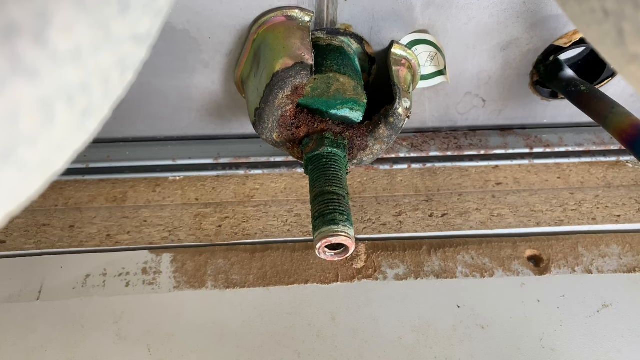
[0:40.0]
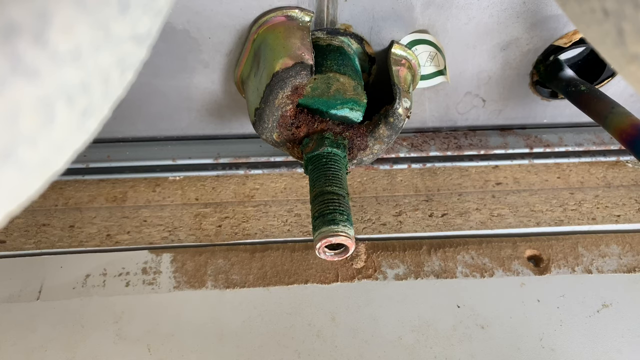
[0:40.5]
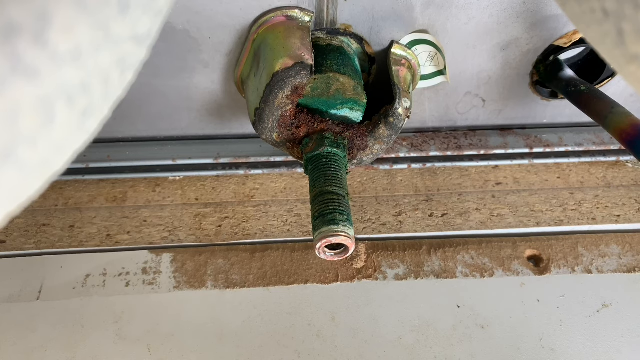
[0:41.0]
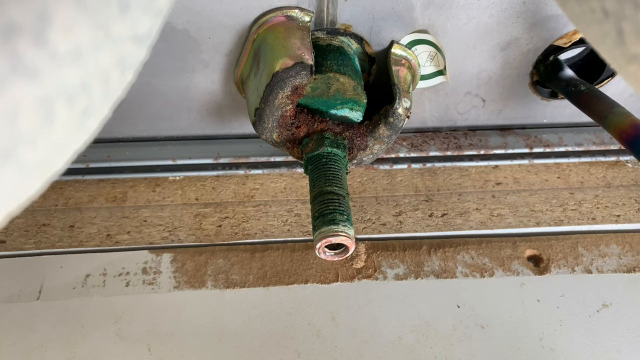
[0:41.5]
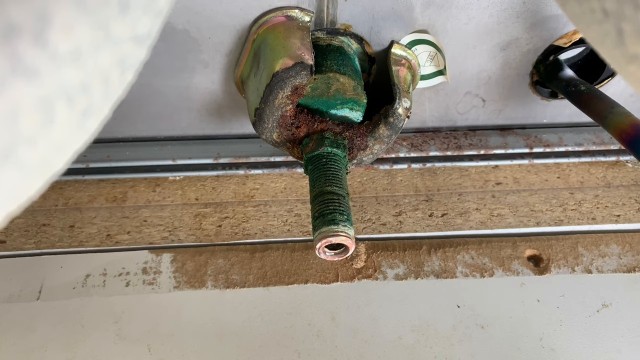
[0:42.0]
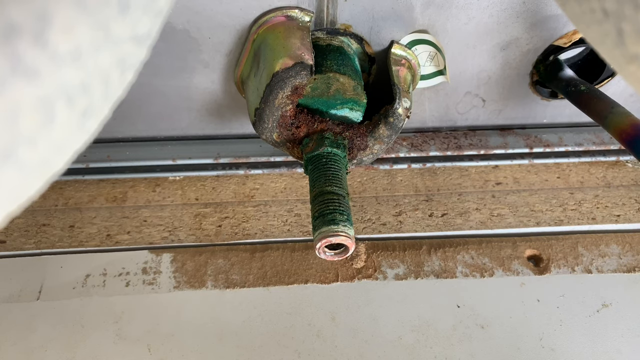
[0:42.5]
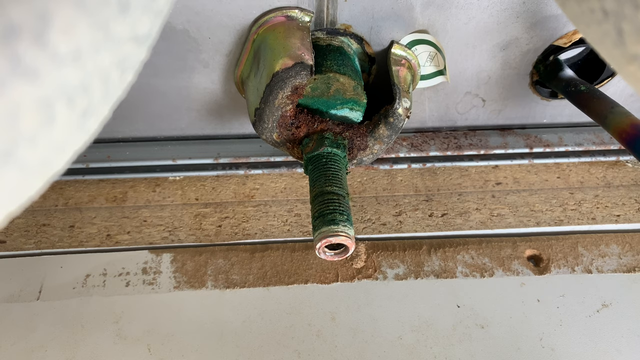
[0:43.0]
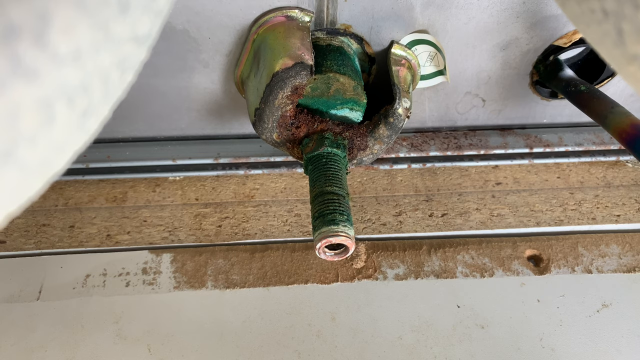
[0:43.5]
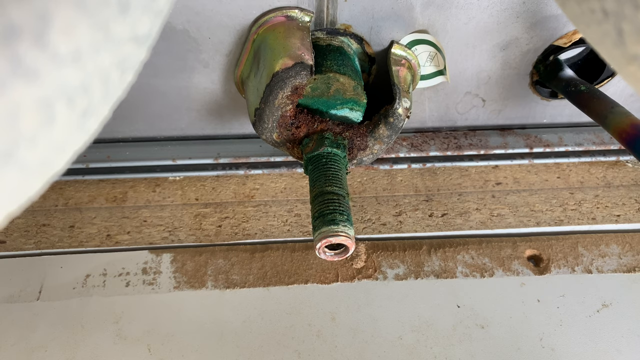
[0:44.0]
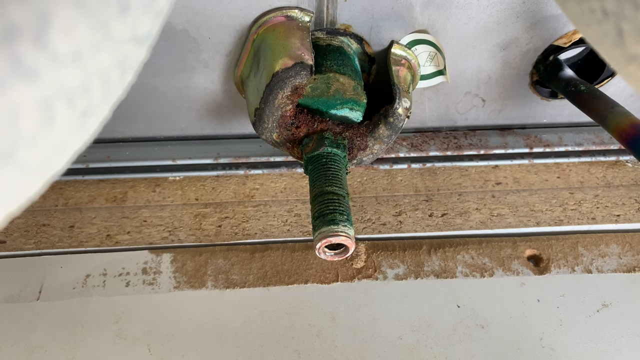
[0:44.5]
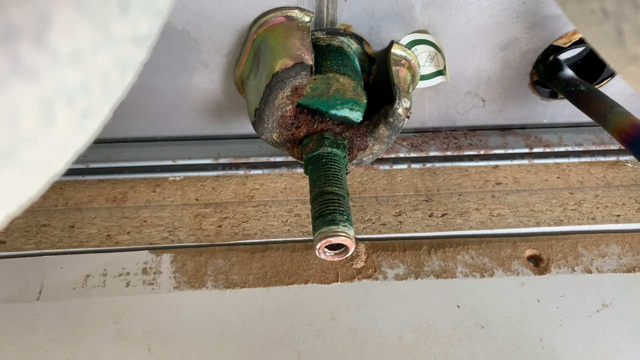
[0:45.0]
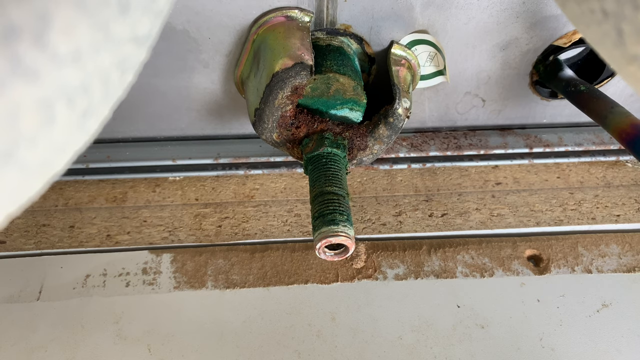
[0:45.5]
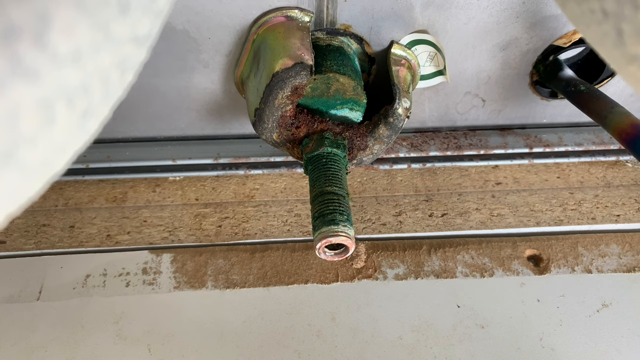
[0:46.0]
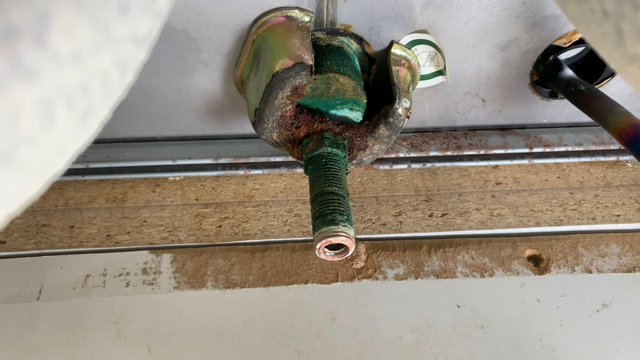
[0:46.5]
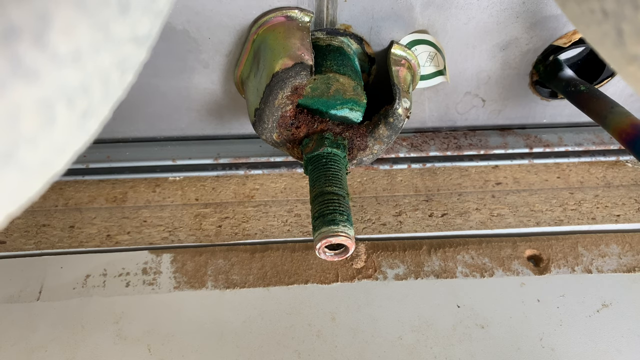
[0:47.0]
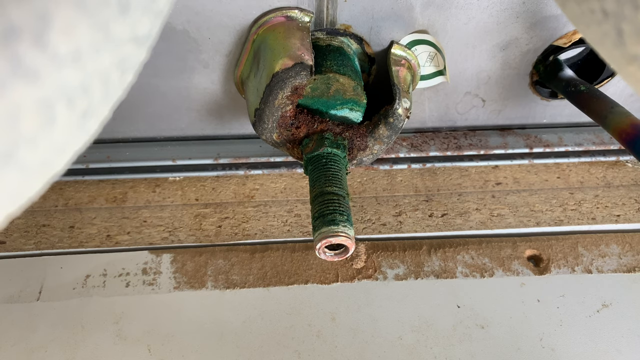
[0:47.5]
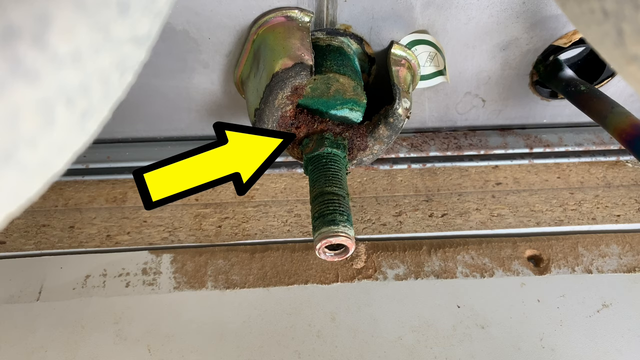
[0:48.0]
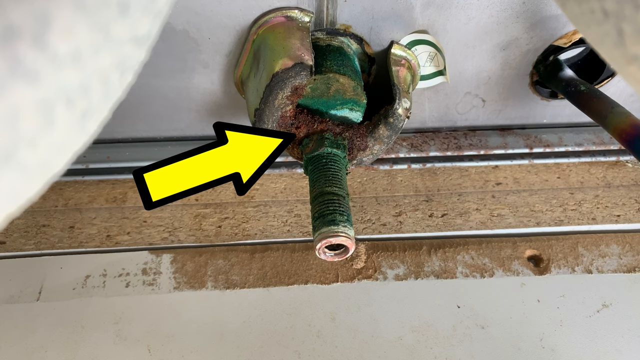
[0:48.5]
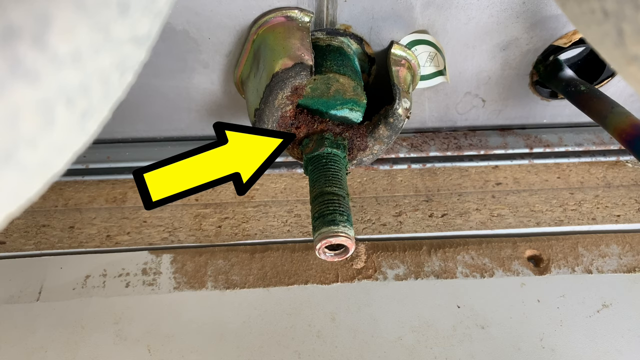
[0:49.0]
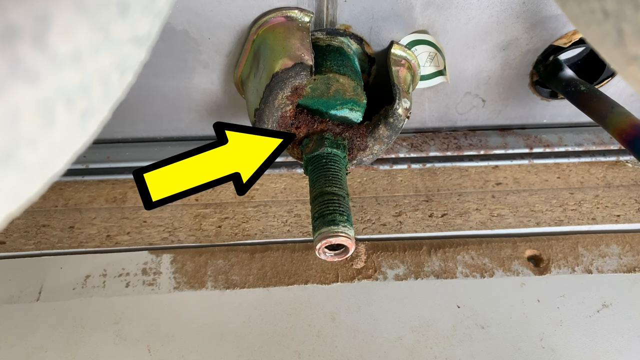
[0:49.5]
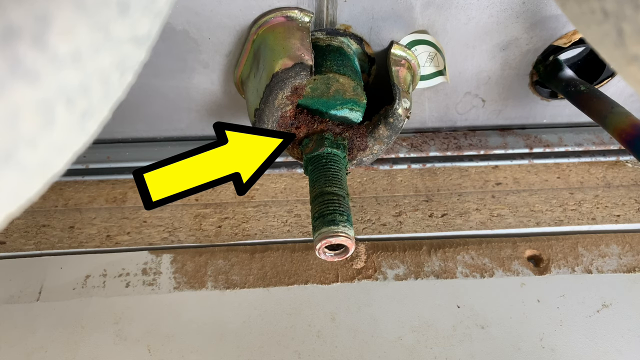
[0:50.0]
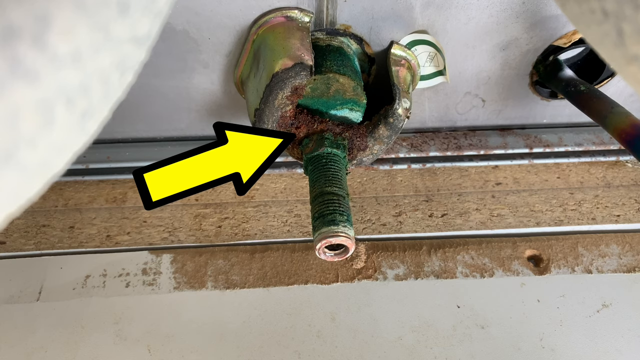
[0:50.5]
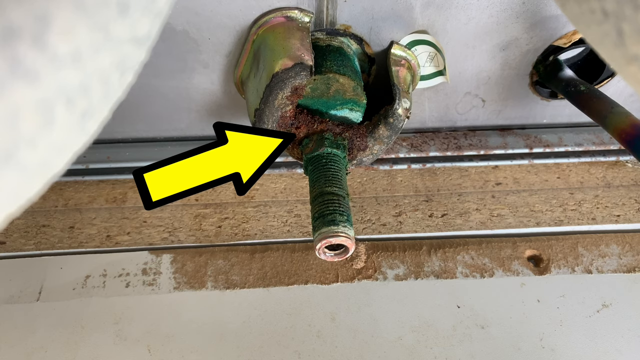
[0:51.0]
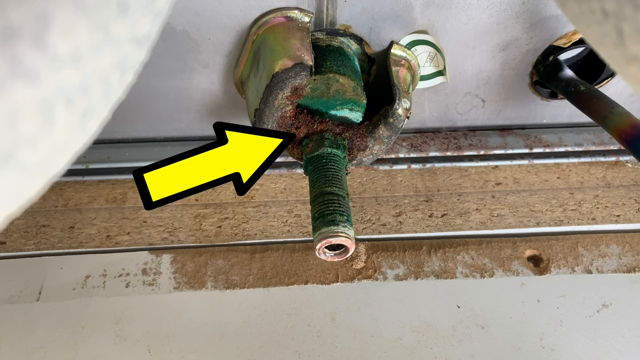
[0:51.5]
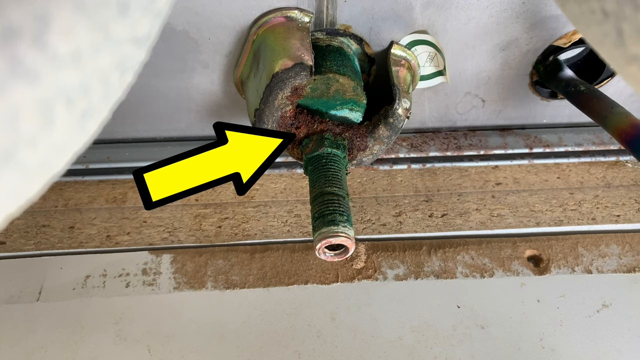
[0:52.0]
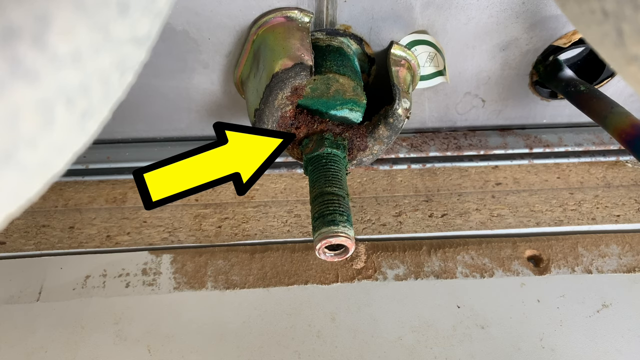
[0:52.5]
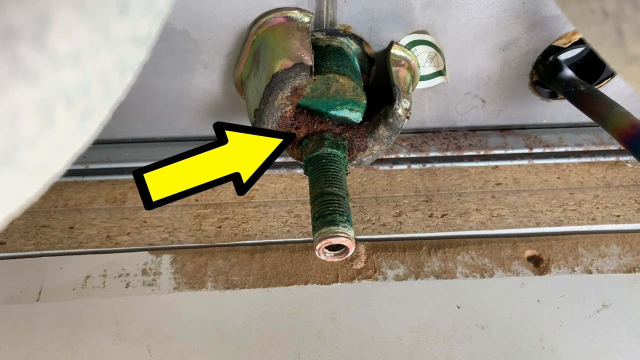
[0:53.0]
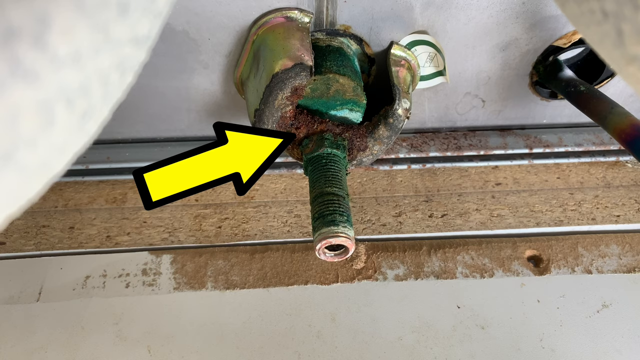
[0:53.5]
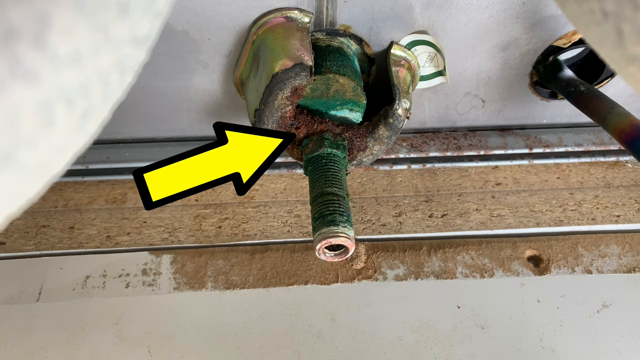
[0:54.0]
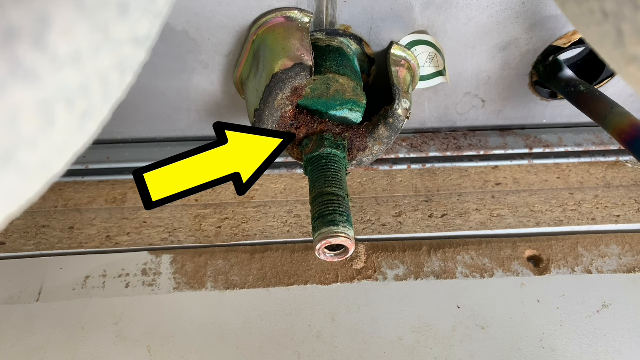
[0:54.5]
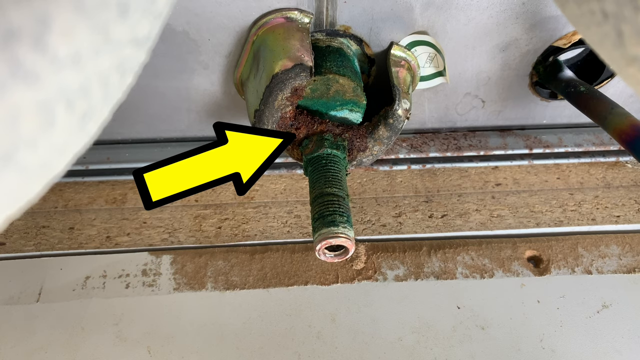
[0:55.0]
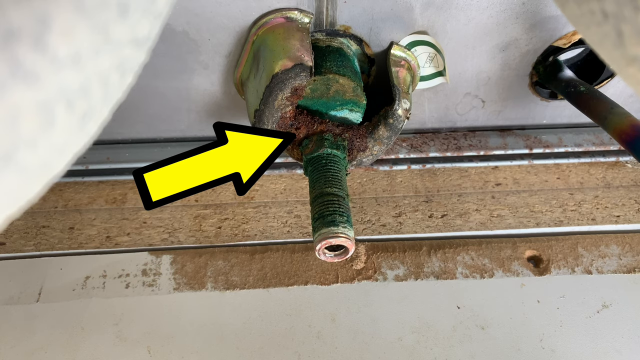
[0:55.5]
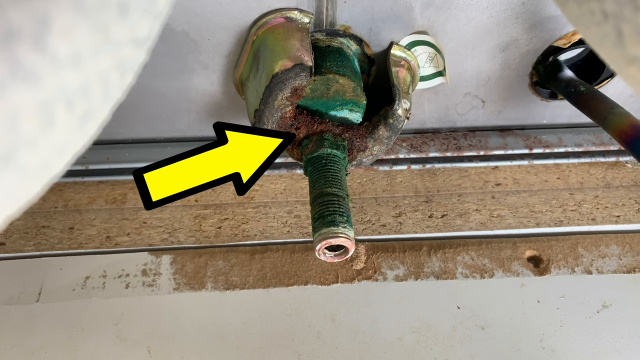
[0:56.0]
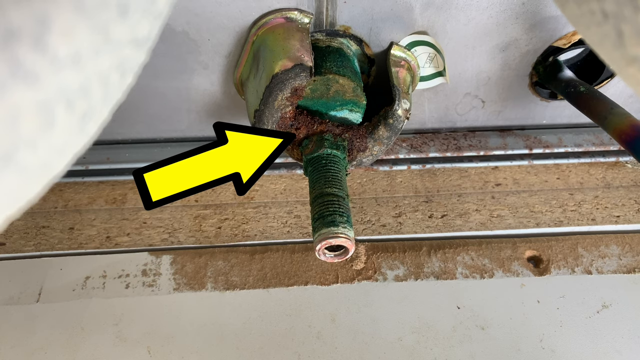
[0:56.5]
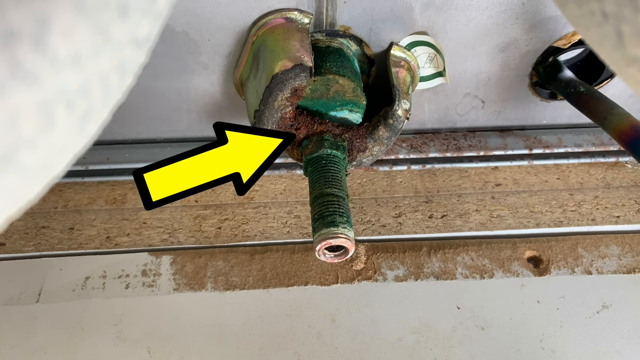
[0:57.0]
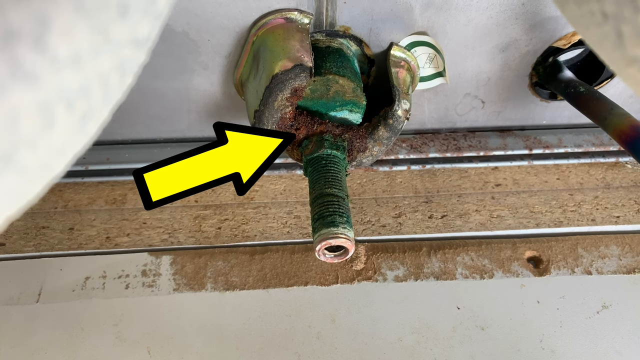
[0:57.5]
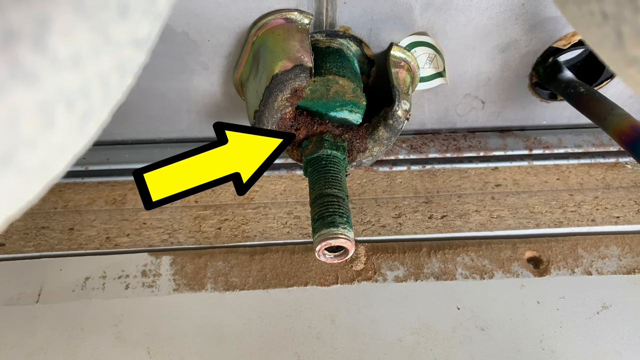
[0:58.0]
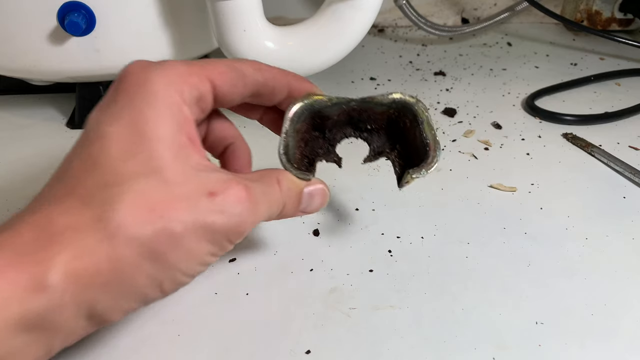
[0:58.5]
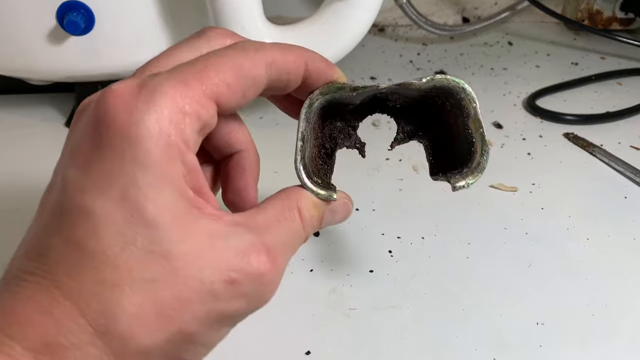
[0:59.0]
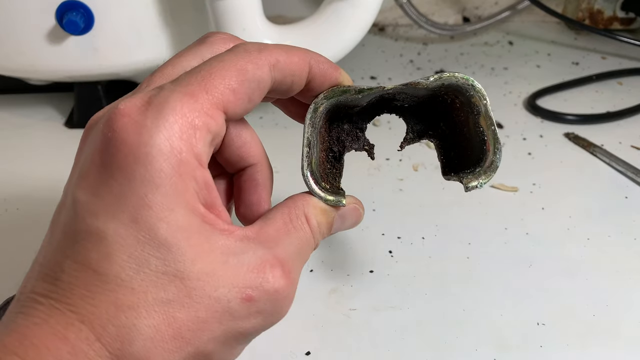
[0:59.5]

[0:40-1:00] The view shows the middle part under the tap protruding beneath the sink, where the mixer tap above and the pipes below are connected. A yellow arrow with a black border points at it from the left-hand side, apparently pointing at what looks like rust. Parts of it are very green, possibly some sort of copper erosion. The stainless steel casing at the top, which formed a single unit, appears to have a hole in its front facing the camera, which is why the corrosion is visible. A man then picks up this corroded piece of fitting, holding it in his left hand between his thumb and first two fingers.